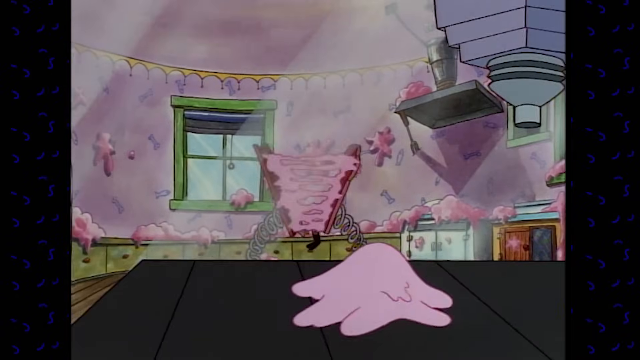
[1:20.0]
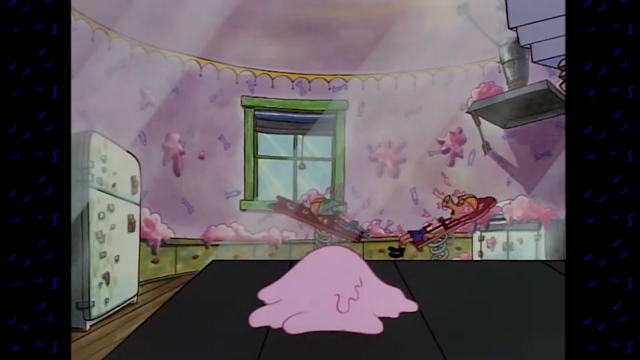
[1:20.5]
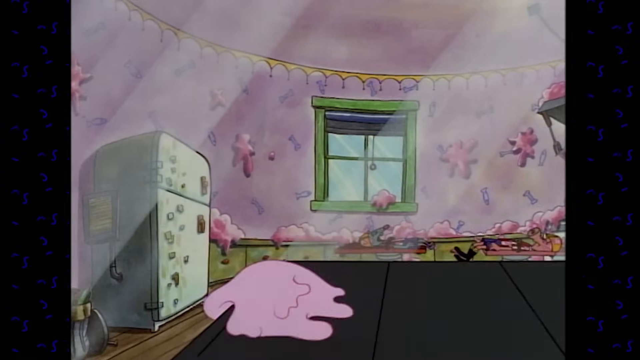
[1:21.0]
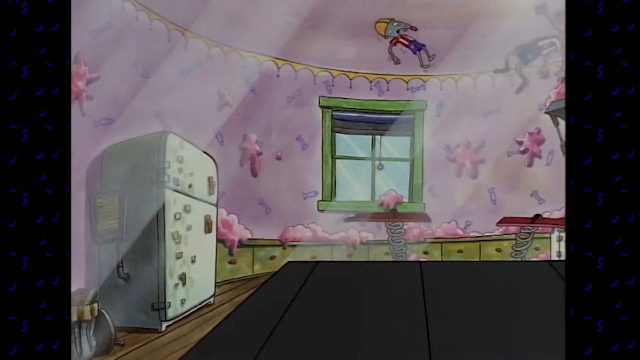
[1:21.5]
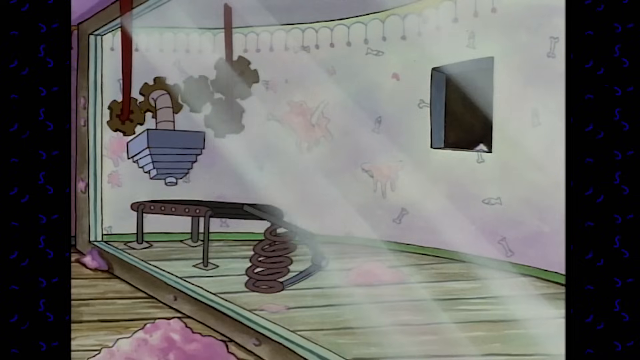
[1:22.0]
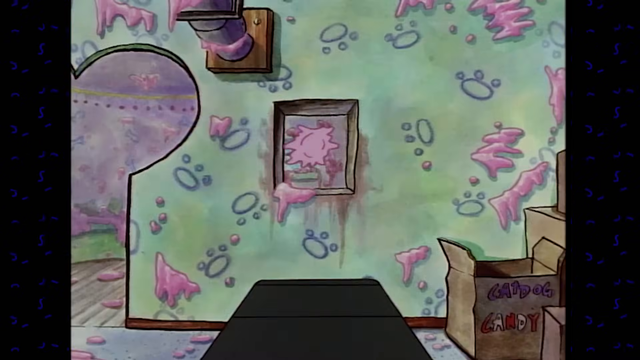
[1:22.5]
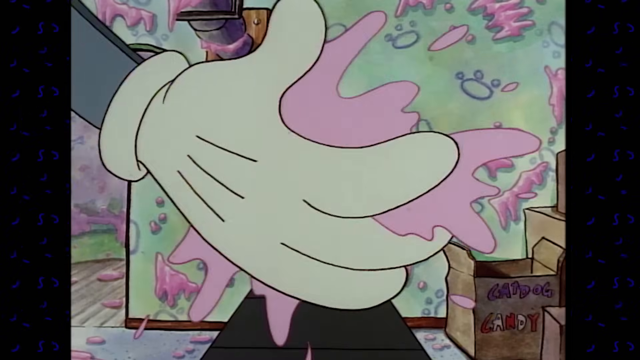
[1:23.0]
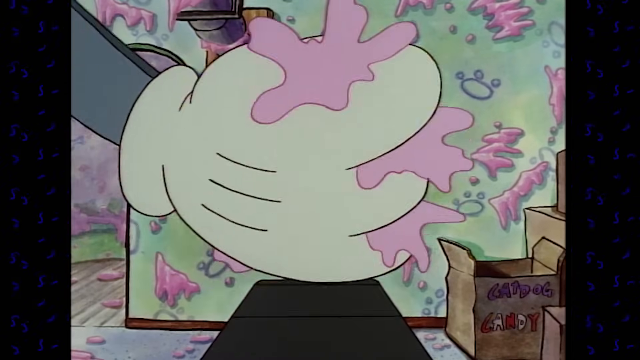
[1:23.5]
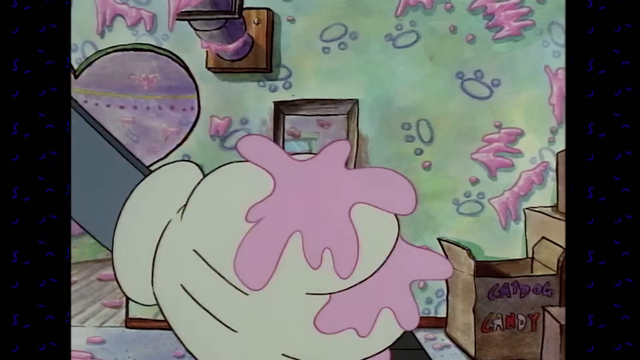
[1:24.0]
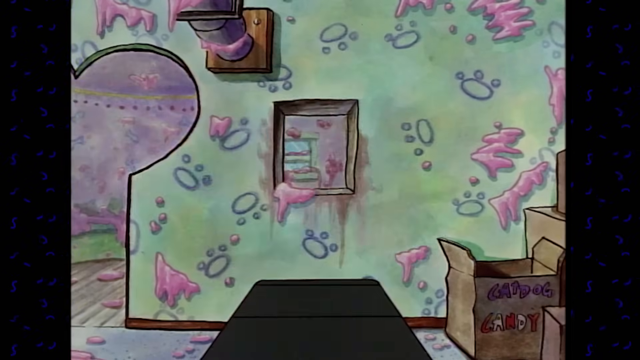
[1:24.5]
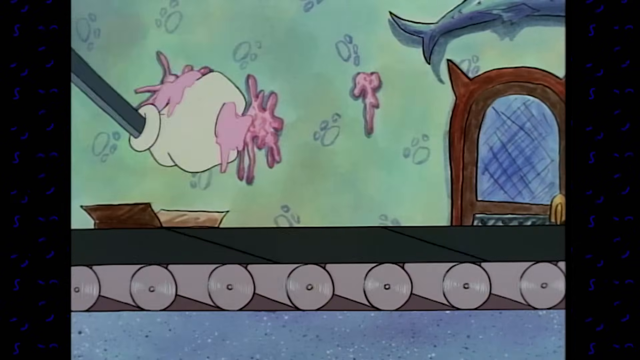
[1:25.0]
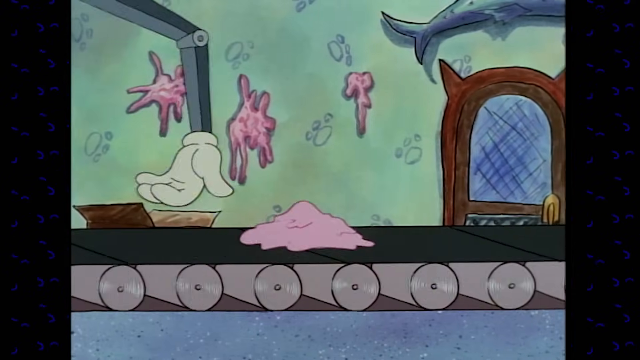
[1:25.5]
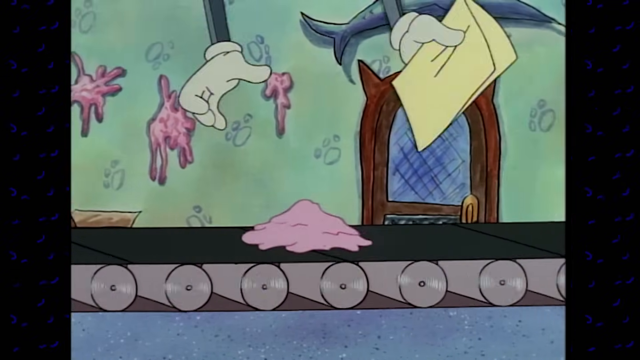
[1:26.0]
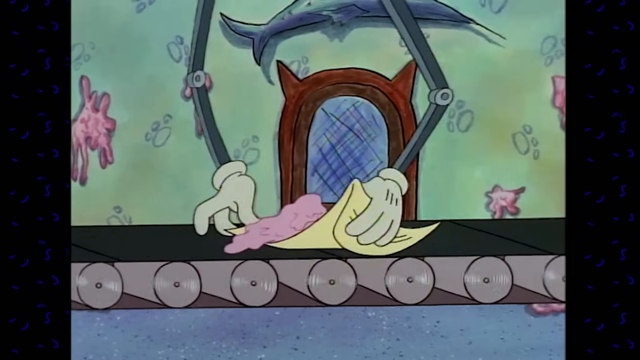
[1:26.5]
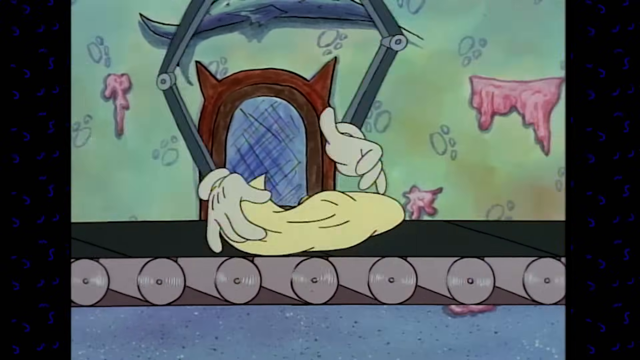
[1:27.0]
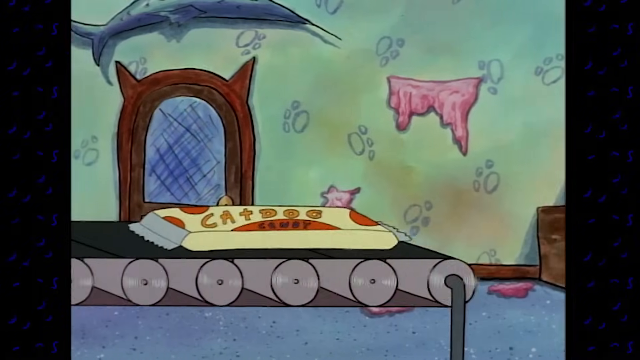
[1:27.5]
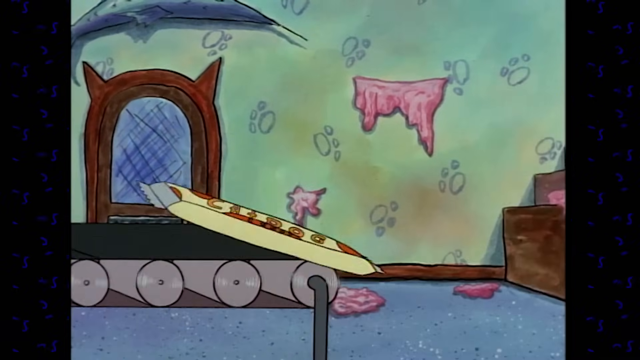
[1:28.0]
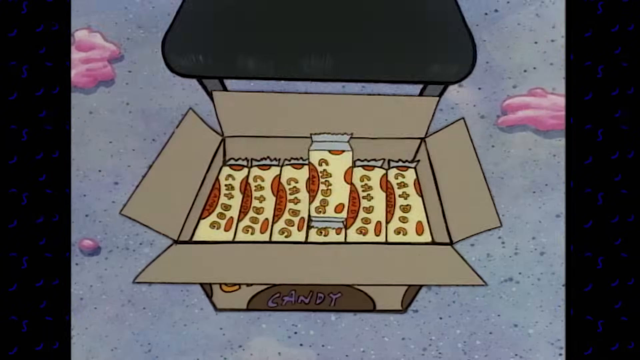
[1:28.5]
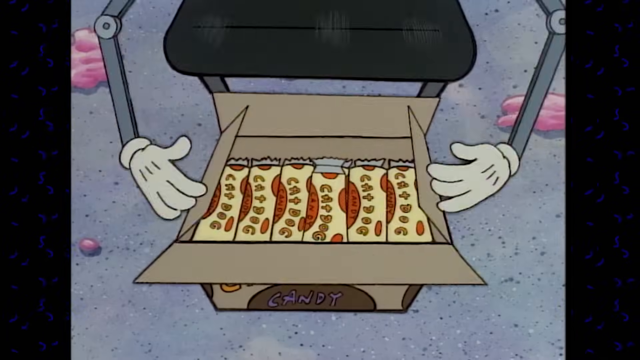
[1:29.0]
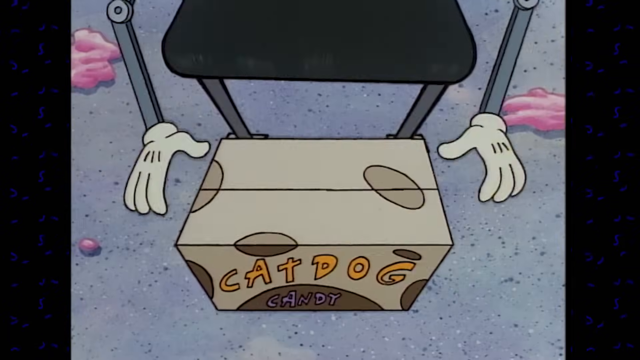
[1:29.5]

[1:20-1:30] The view is from the assembly line, and in the background exactly the same thing is happening to the two people as before. One of the portions on the assembly line flies to the floor, and another contraption opens in the floor and flings the goo through a hole in the wall. The view cuts to the other side of the wall, where a hand grabs the goo and puts it on another assembly line. Mechanical hands come from above and package the goo into something neat that looks like it could be sold, and it says "CatDog". The CatDog bar falls into a candy box with a large logo on it reading "CatDog candy".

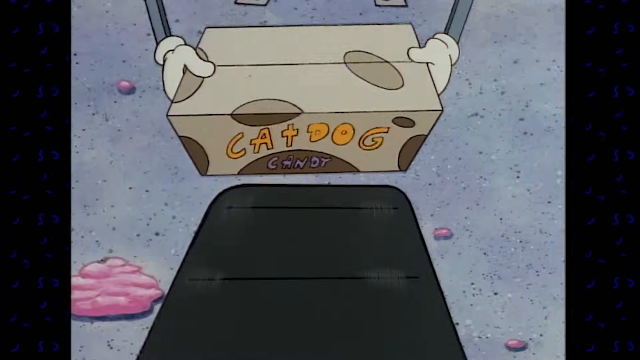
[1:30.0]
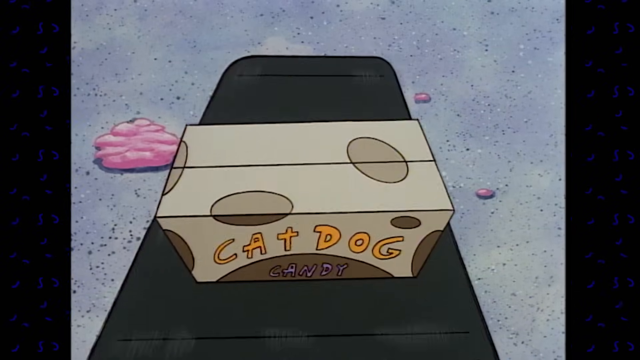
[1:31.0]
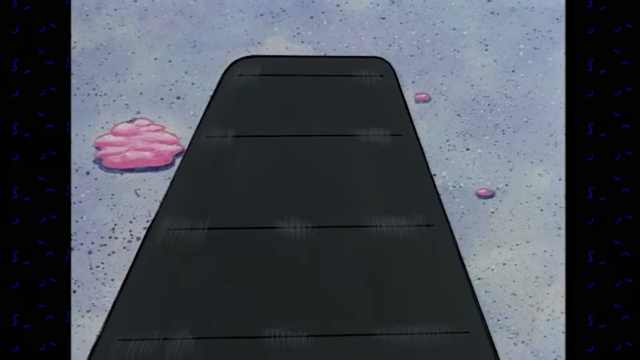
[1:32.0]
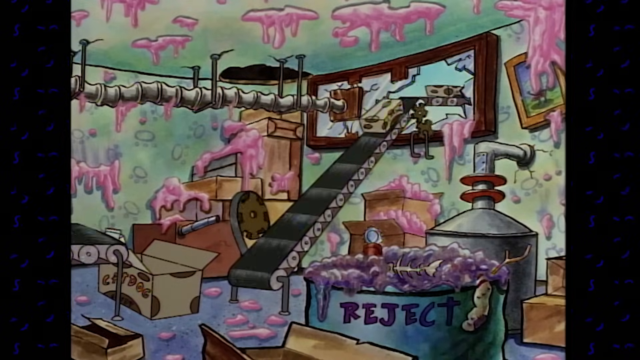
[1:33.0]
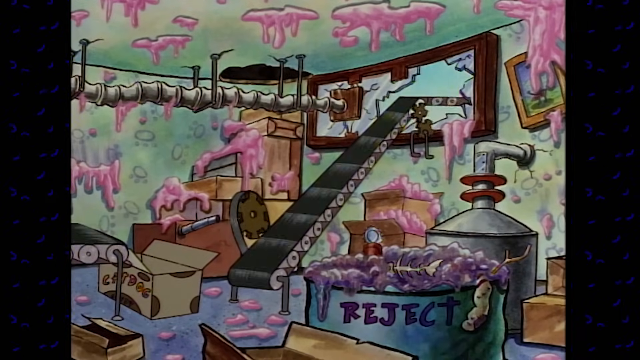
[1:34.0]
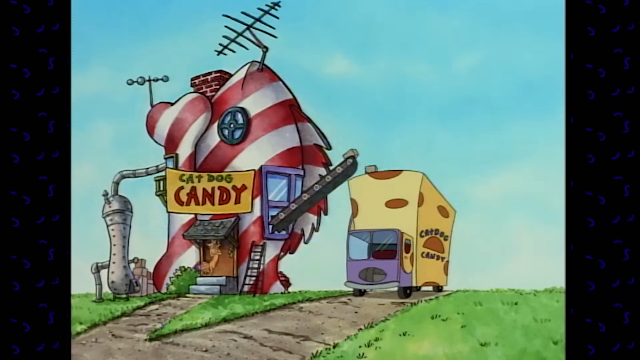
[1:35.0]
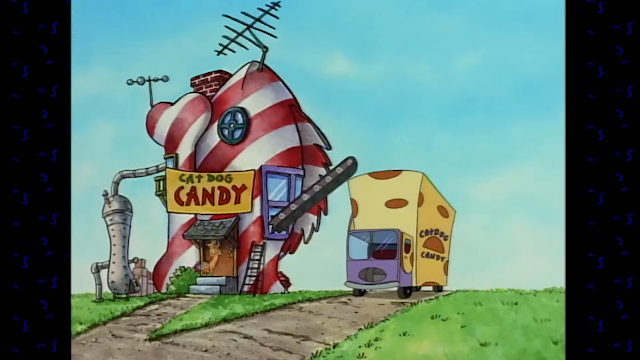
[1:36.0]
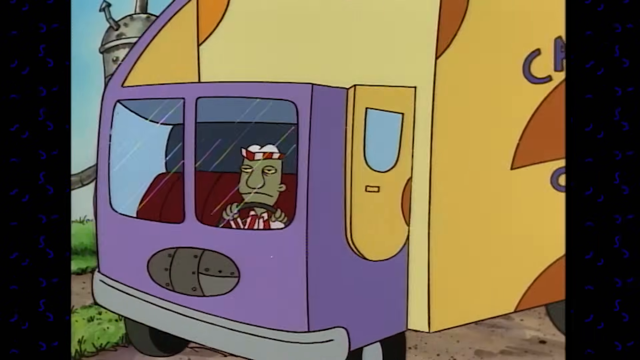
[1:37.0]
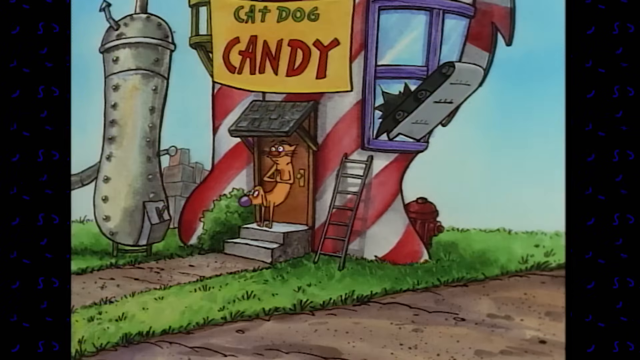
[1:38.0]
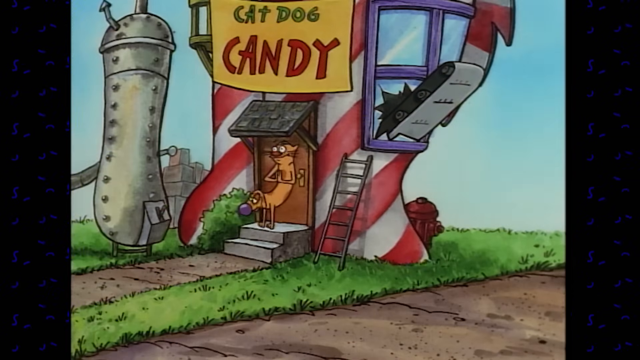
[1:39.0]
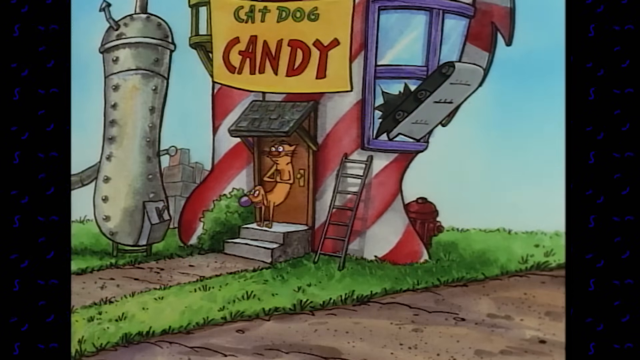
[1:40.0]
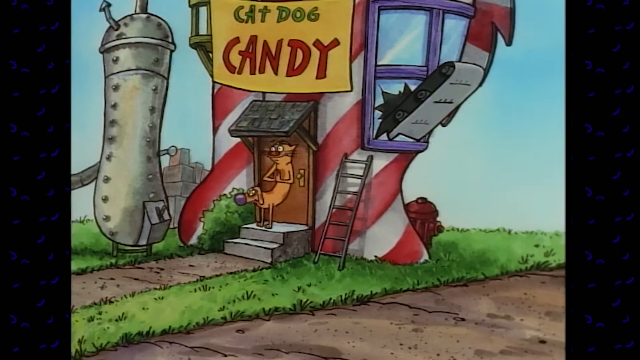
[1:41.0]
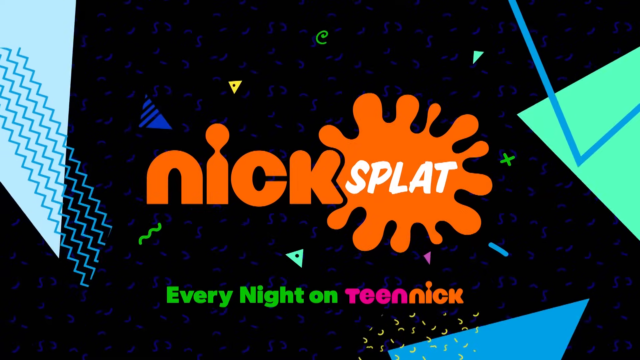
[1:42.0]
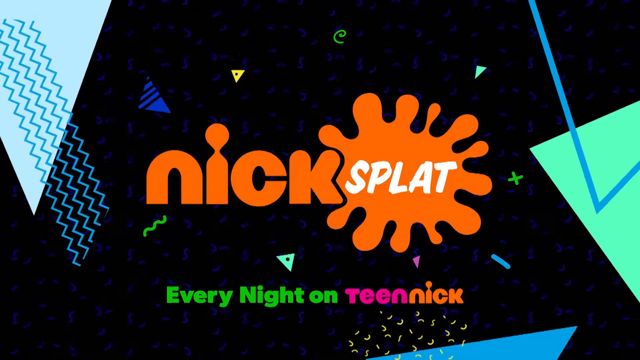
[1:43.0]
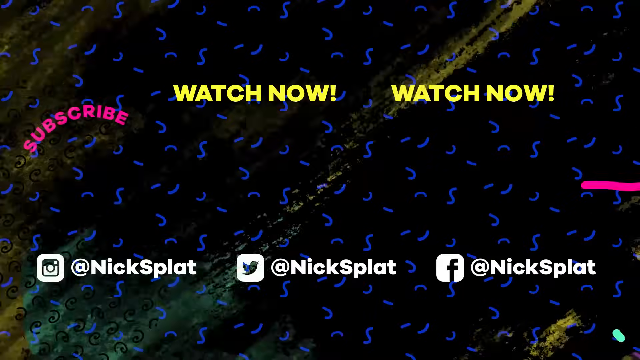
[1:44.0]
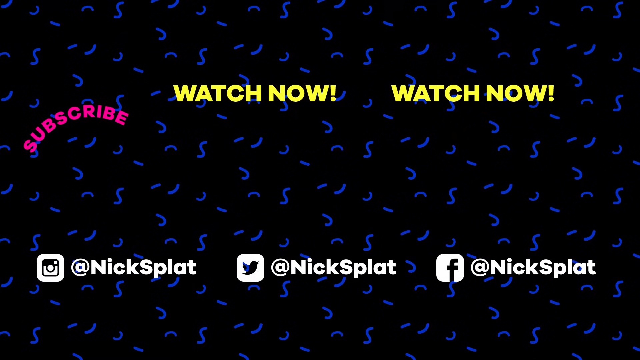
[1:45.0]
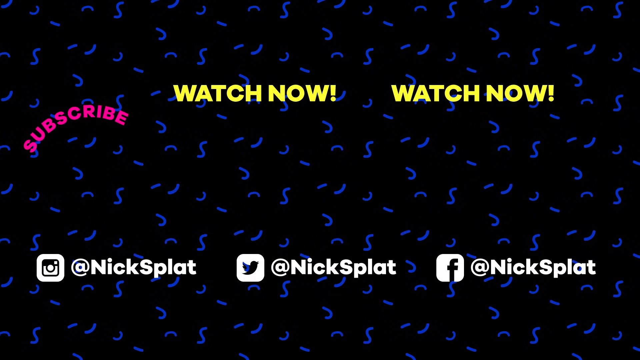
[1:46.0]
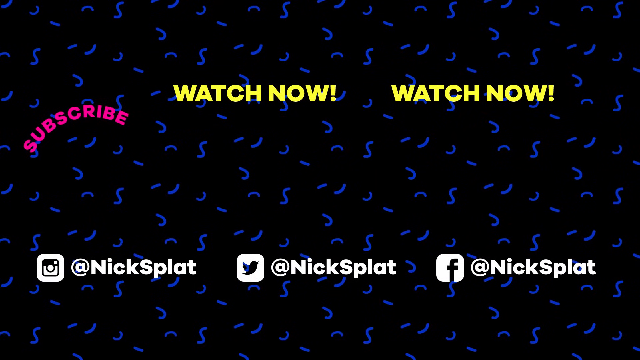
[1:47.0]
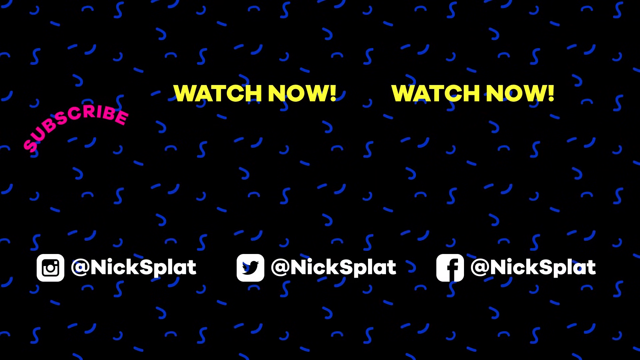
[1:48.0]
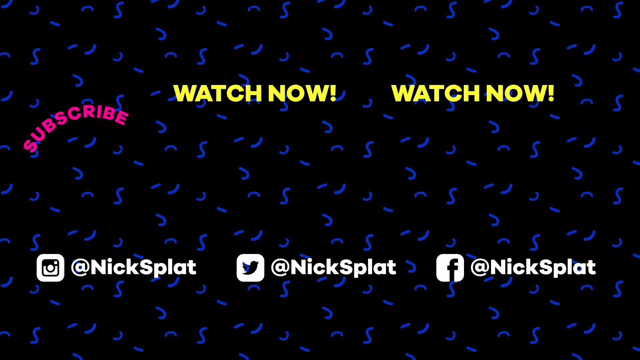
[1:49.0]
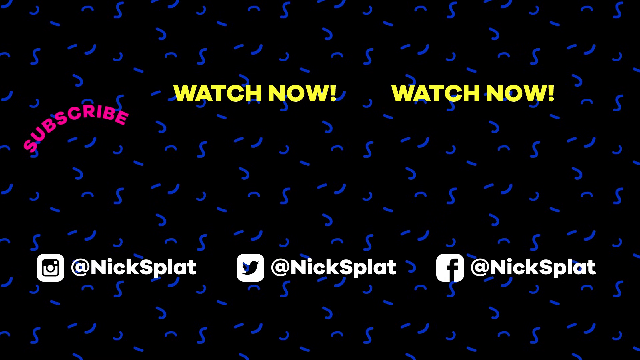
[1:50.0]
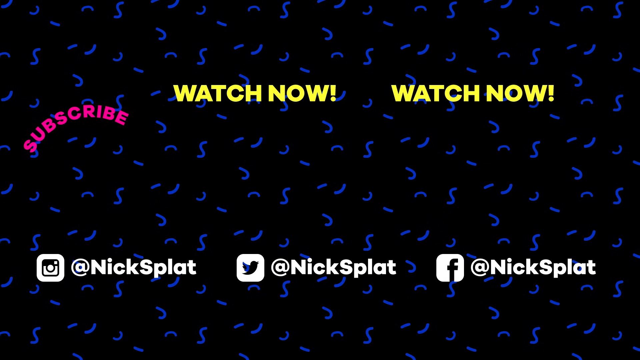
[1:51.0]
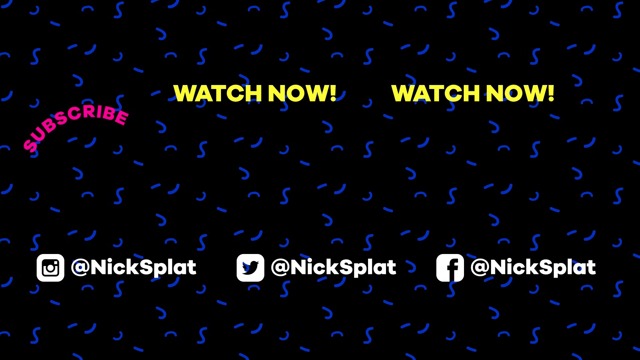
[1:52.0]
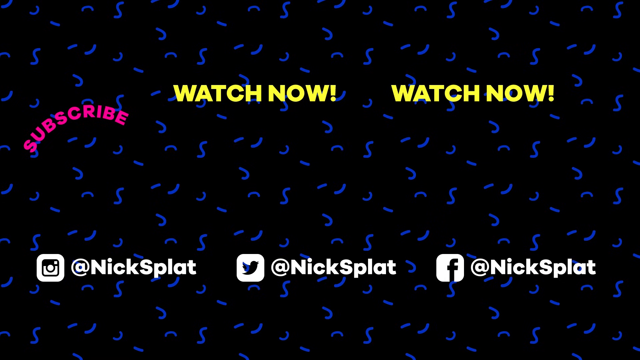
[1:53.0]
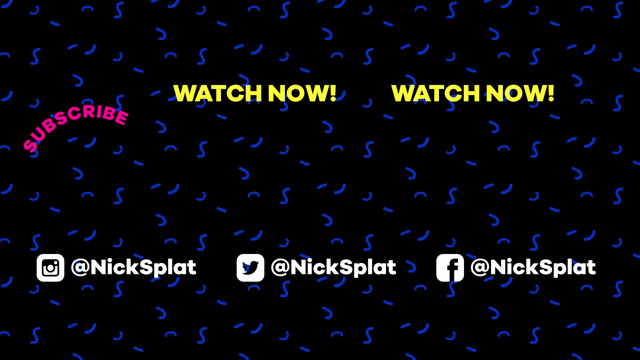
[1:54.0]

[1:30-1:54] Robotic arms put the CatDog candy onto another assembly line. A shot of the kitchen shows the assembly line running out of the window. A shot outside shows the assembly line rising a little high in the air so it can reach over a high-top transporter, and the CatDog candy falls into it. The truck drives off, and the CatDog stands in front of their house watching the transporter go. The video then switches to the logo of the channel, Nik Splat. The logo is simple yet colorful and looks a little like the 90s; the splat in Nik Splat is itself a splat. It then cuts to another frame with social media tabs for watching and subscribing.